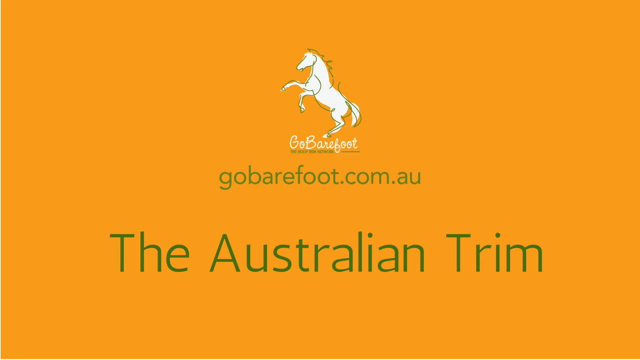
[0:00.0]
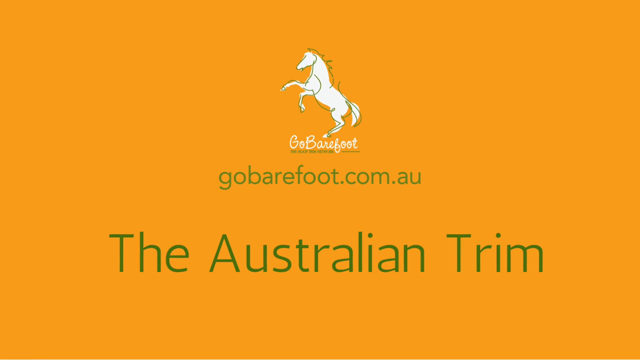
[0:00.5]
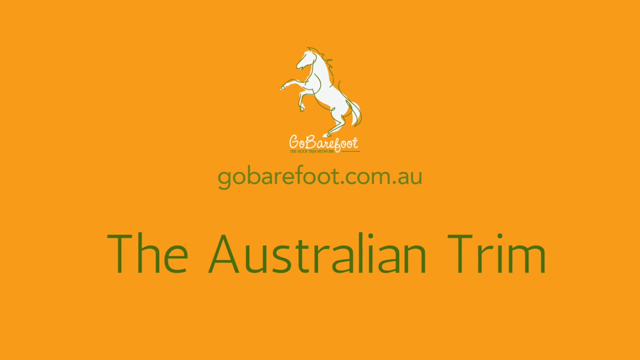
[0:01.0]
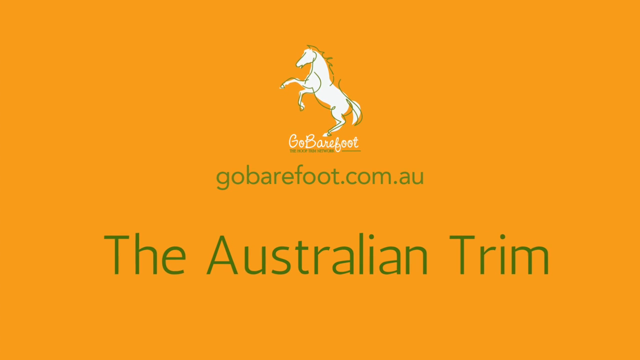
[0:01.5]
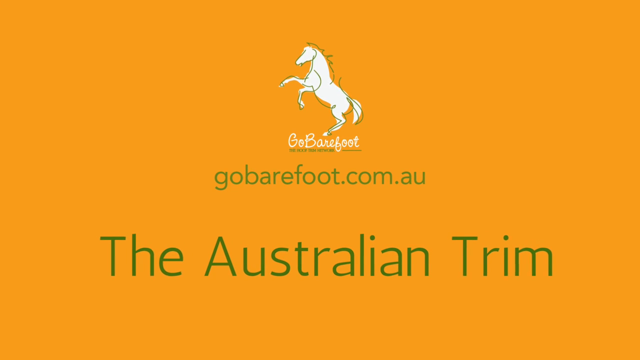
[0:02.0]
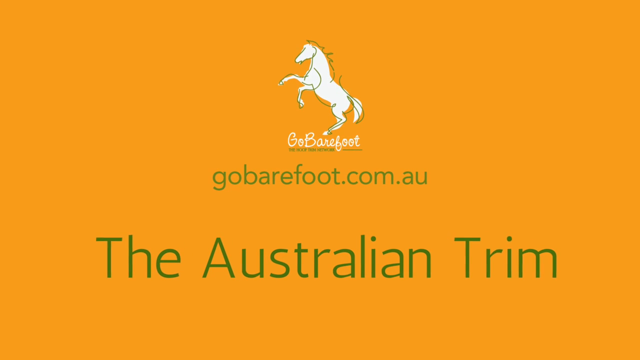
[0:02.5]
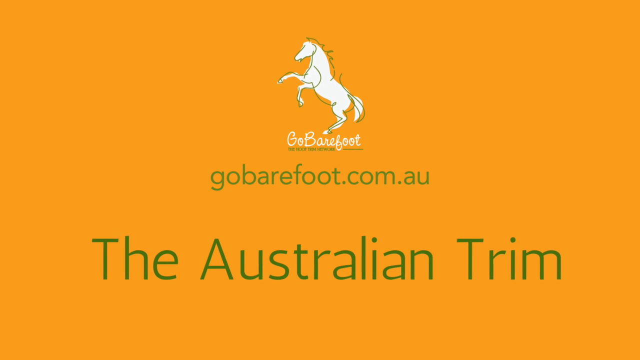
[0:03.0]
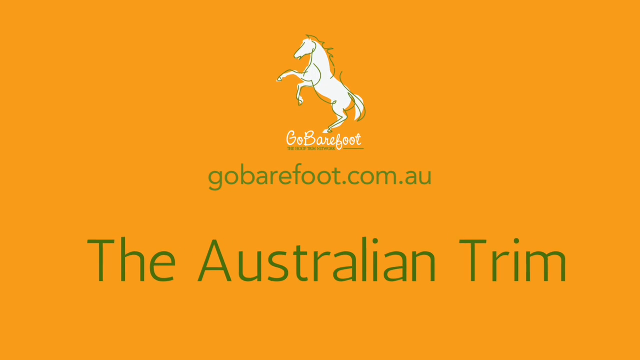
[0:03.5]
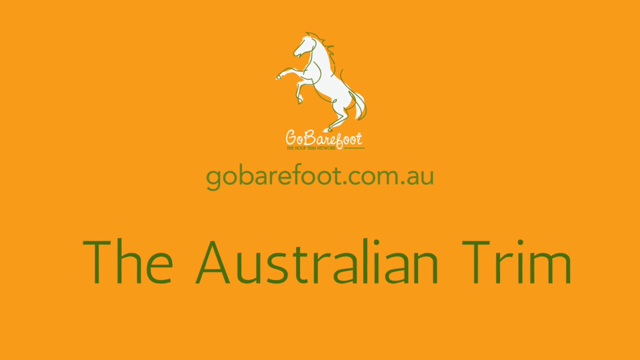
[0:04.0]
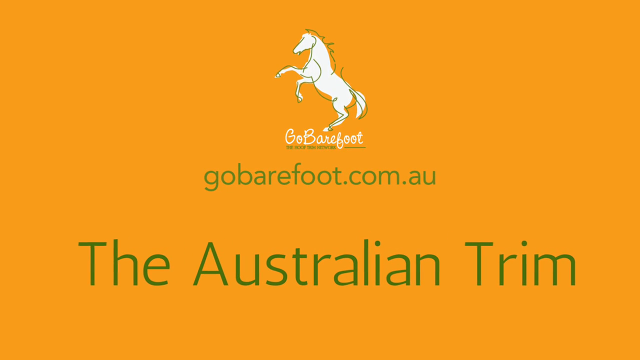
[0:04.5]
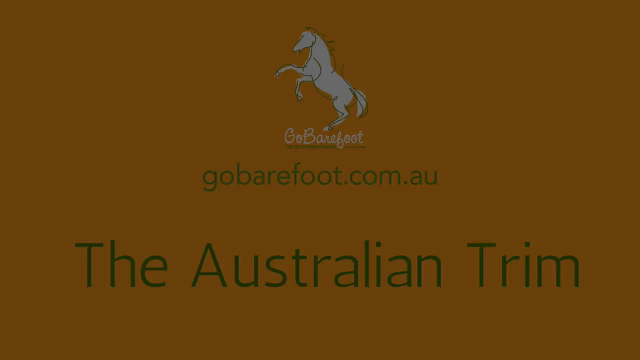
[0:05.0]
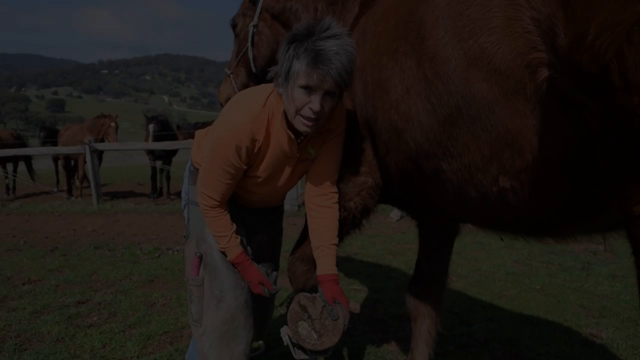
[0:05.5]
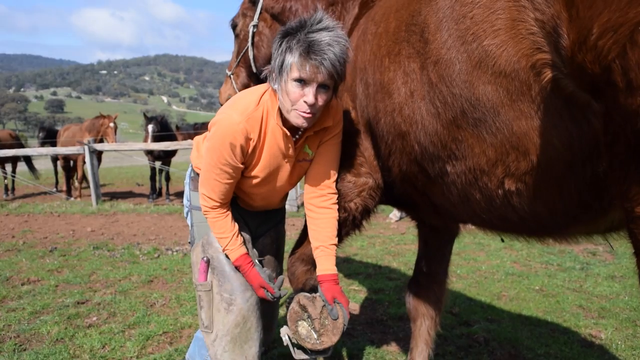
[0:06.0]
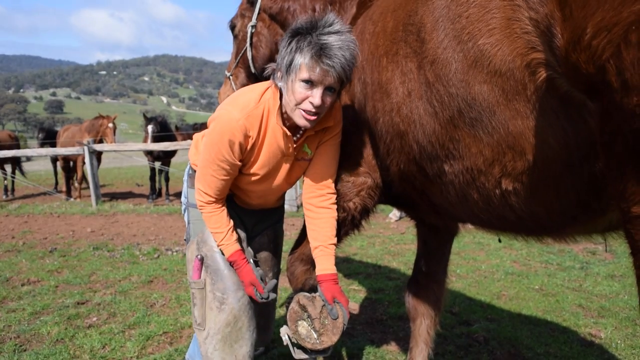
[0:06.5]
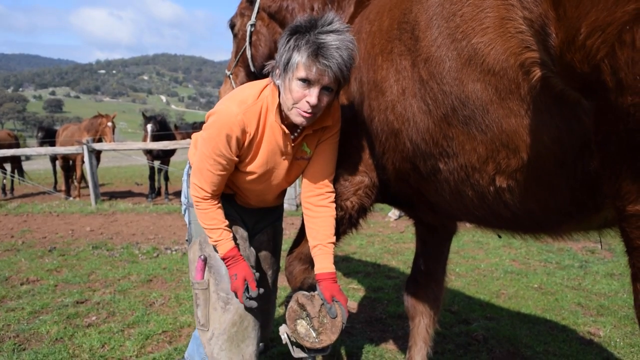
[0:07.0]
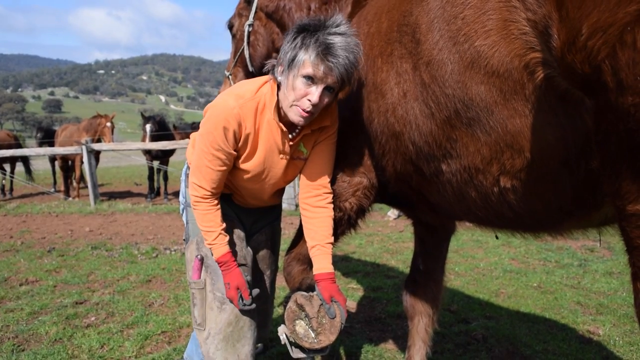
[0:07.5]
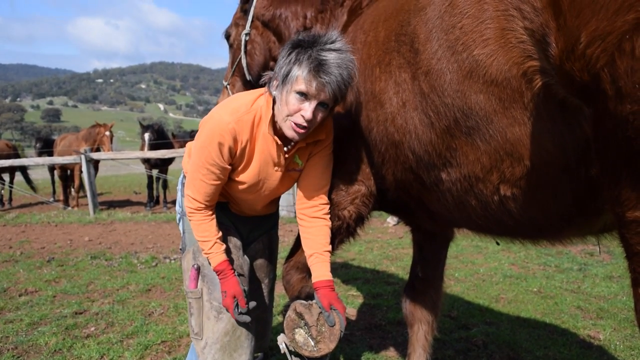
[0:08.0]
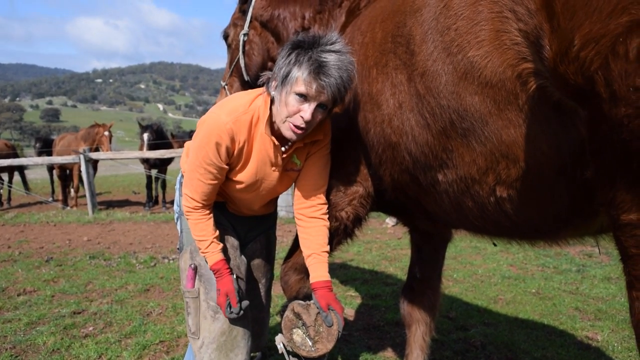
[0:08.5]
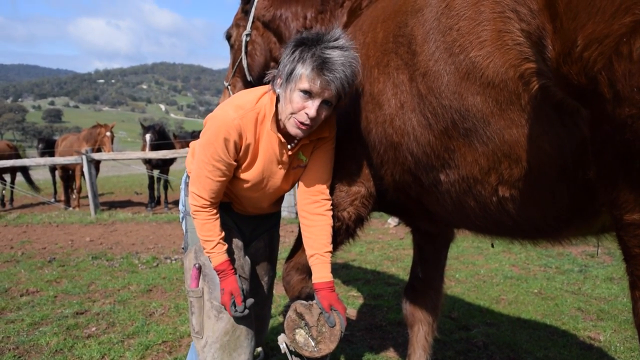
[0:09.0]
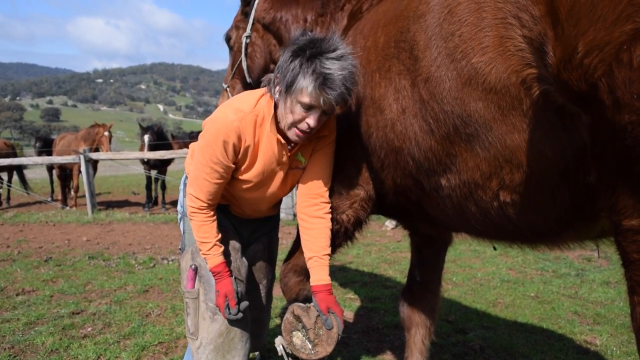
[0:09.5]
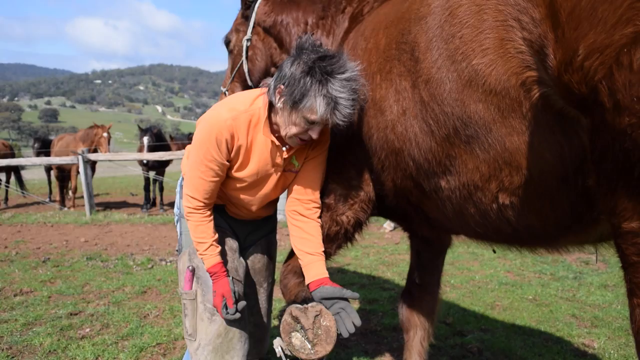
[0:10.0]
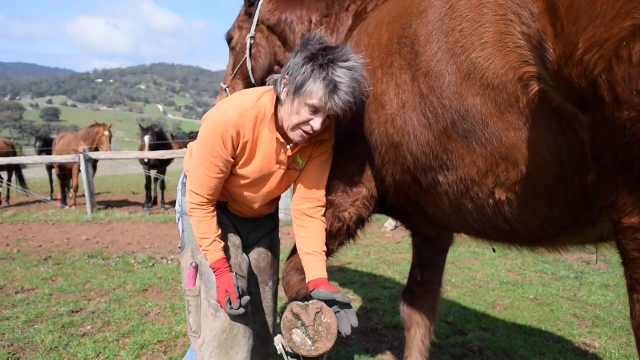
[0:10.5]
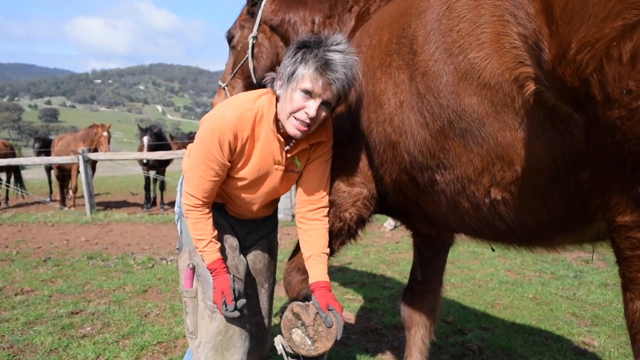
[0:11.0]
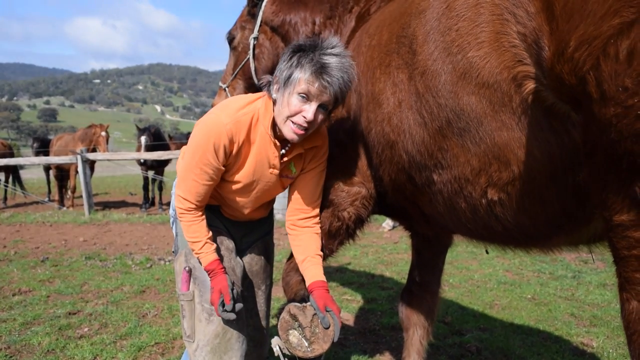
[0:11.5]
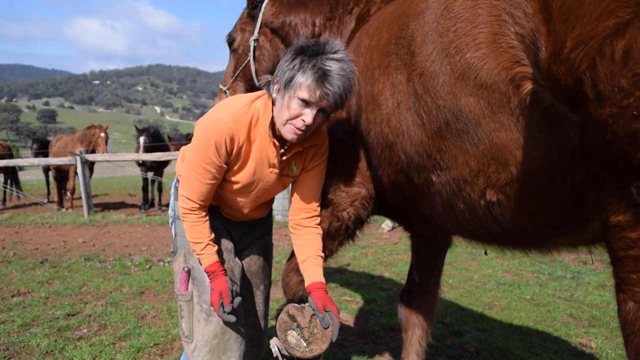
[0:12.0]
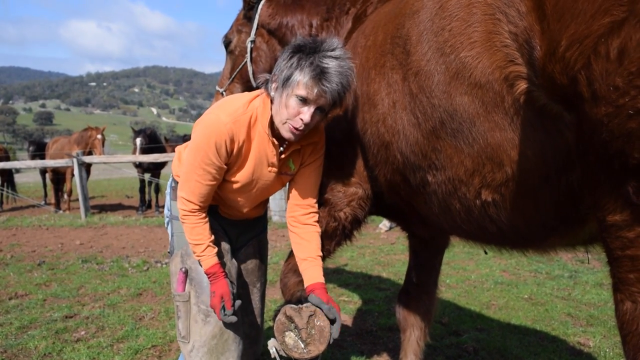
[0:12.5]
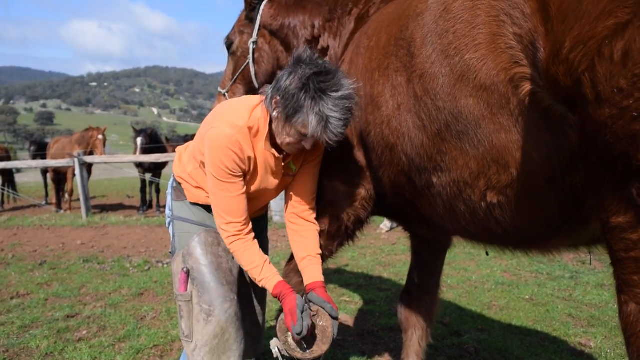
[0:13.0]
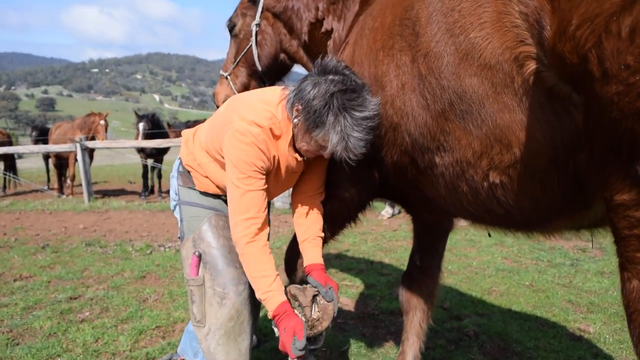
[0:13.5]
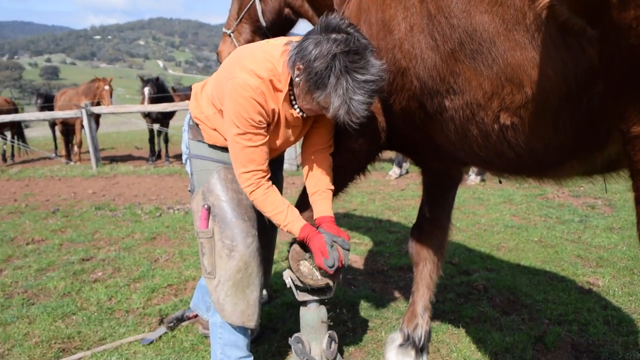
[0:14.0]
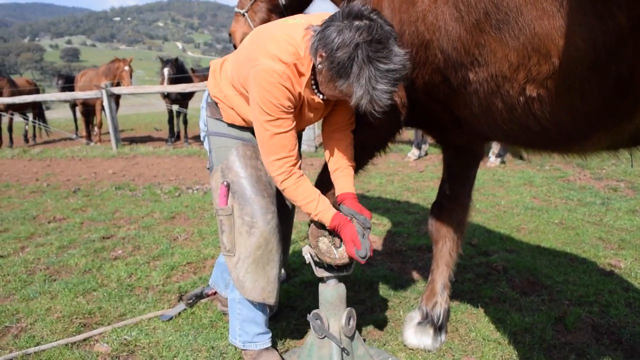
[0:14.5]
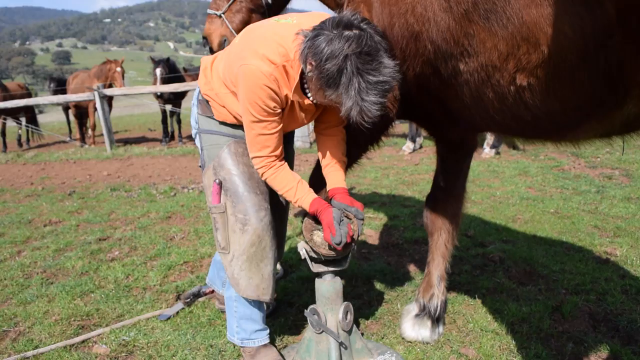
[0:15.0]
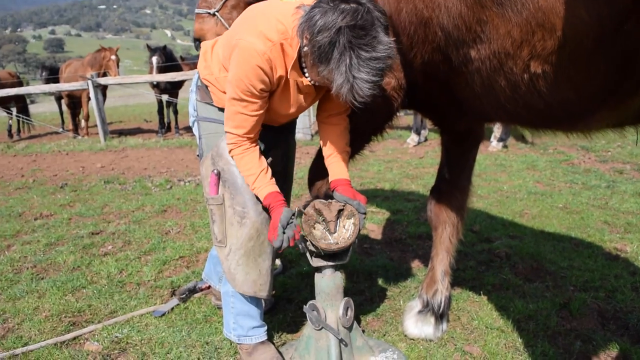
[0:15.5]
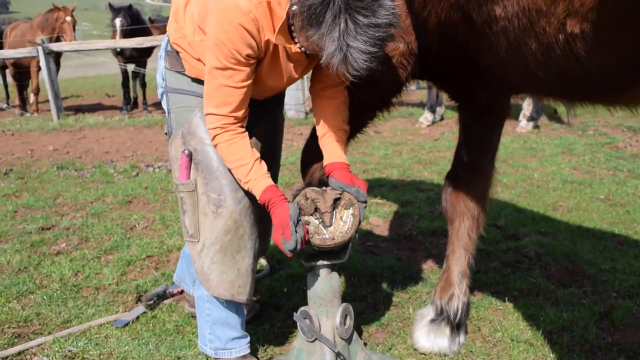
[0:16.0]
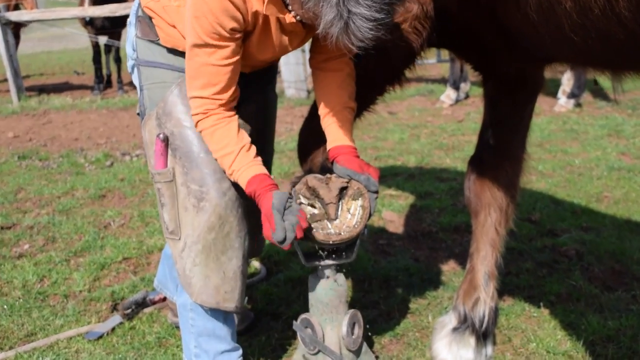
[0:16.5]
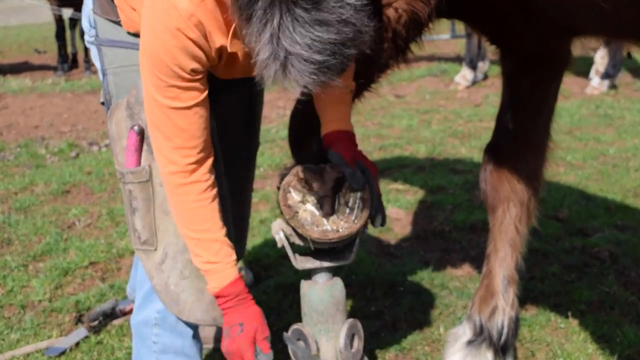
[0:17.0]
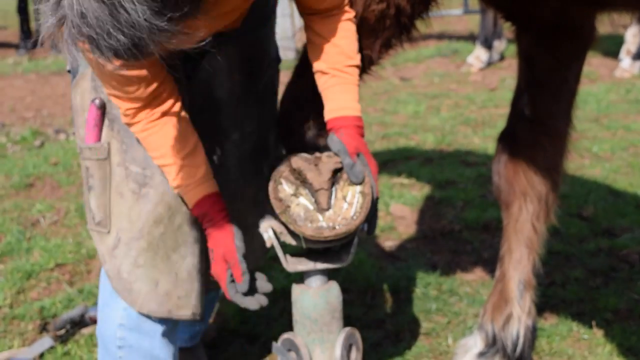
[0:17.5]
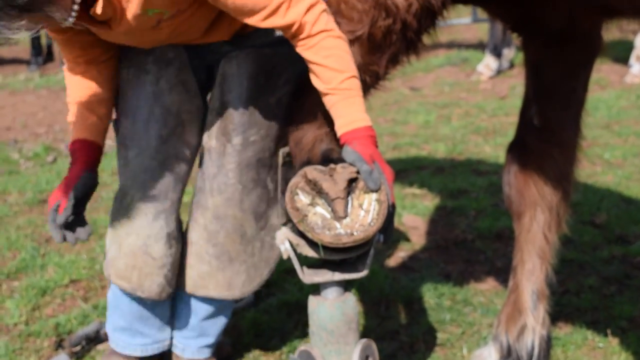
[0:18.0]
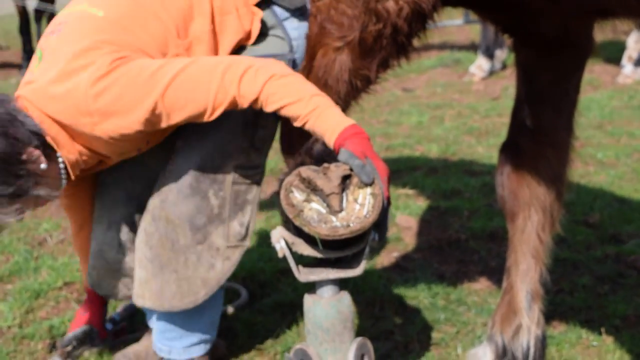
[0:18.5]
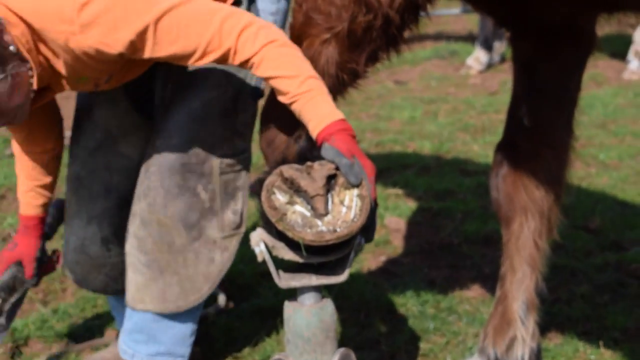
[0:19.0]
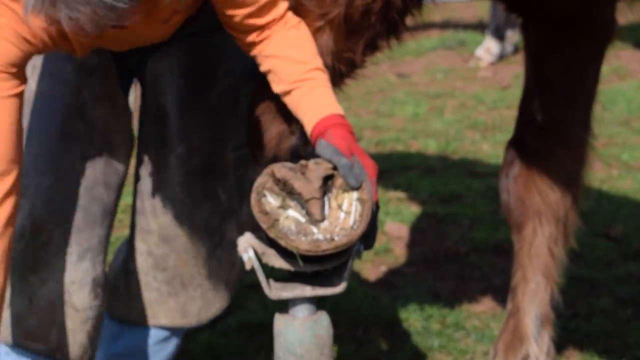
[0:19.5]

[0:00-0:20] Titled The Australian Trim, the video shows a lady explaining how to trim a horse's hooves. She has short grayish hair and wears a long-sleeve orange shirt and blue jeans, with what looks like some type of smock over her jeans that has pockets for her tools. Her gloves are red on top and a blackish gray on the inside. The horse is brown, and its left front hoof is bent up while she shows how to clean it out; she appears to be removing the dirt from it with a tool. In the background there are five other horses visible behind a little fence, and behind the brown horse there is another horse outside the fence. As the camera zooms in, that horse's feet are visible, looking white and brown.